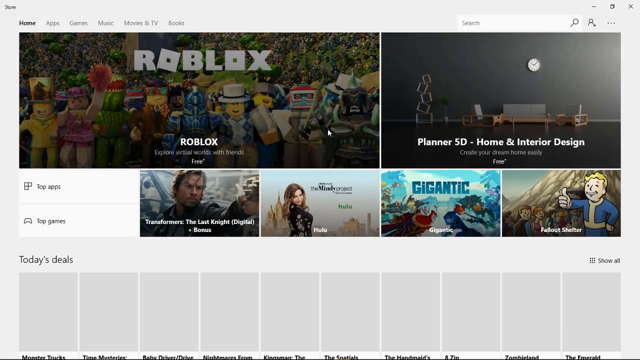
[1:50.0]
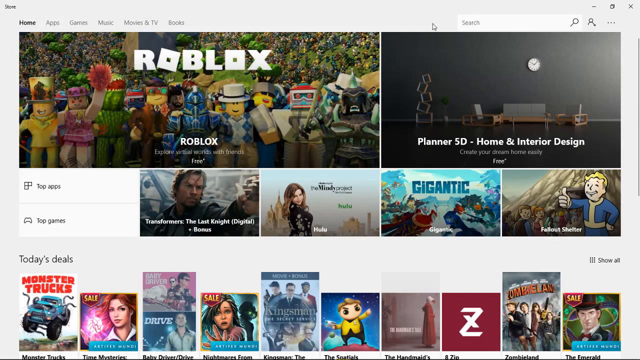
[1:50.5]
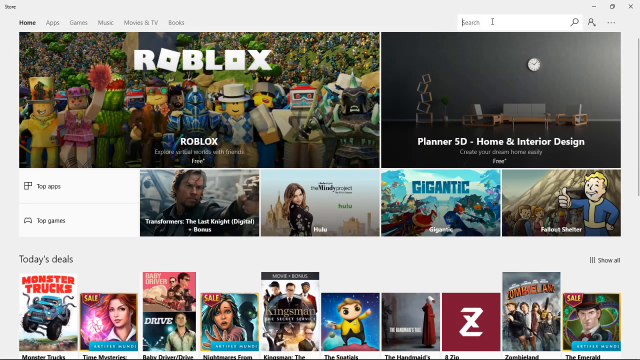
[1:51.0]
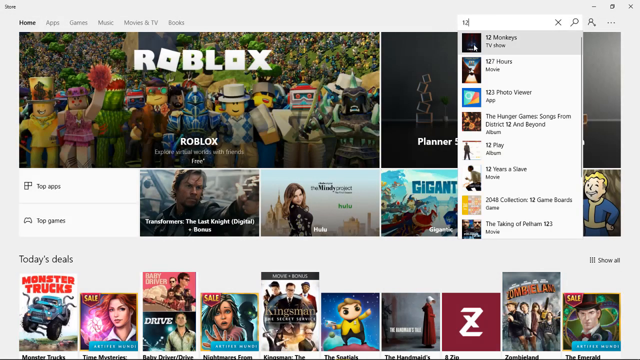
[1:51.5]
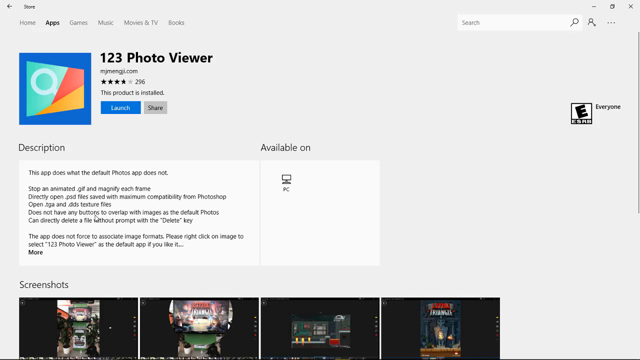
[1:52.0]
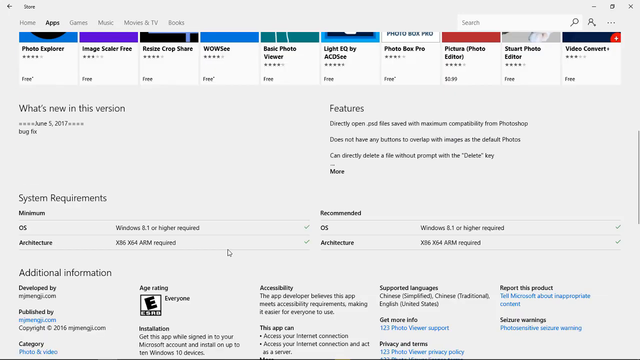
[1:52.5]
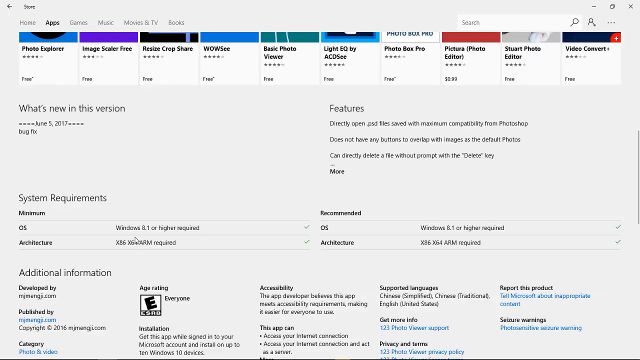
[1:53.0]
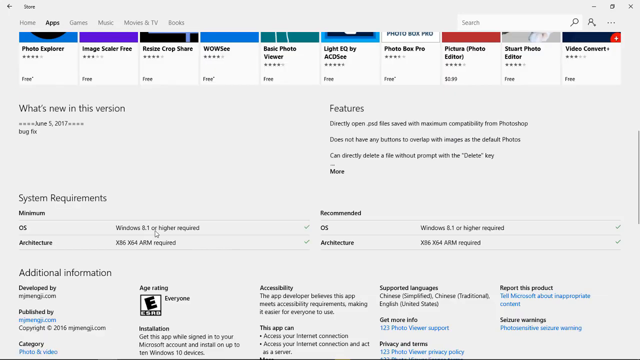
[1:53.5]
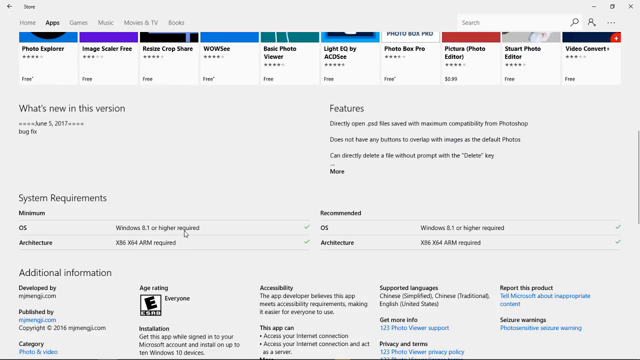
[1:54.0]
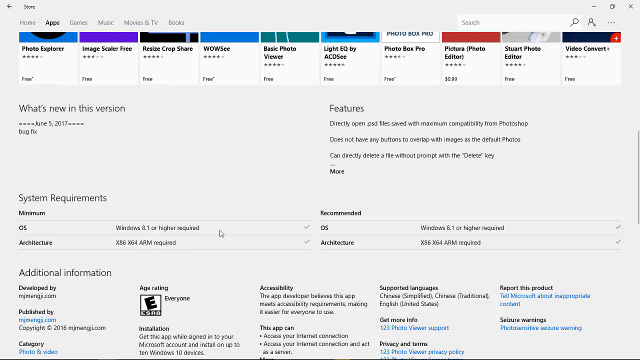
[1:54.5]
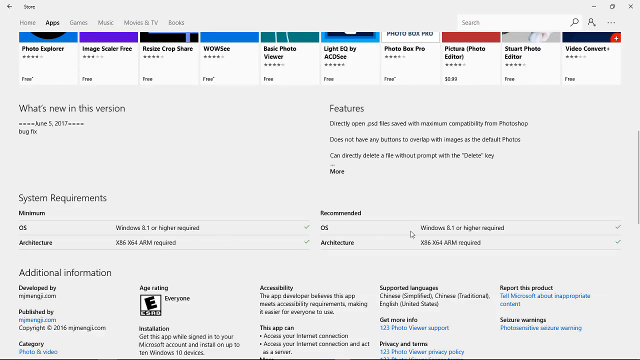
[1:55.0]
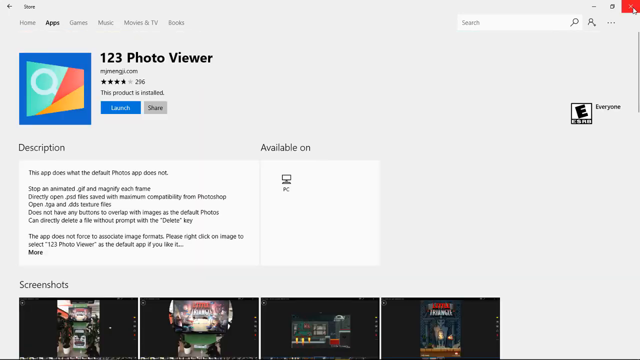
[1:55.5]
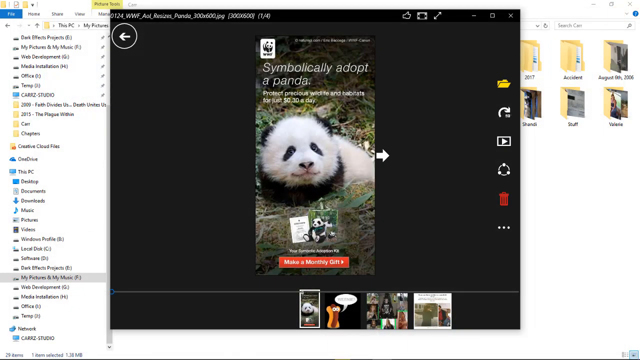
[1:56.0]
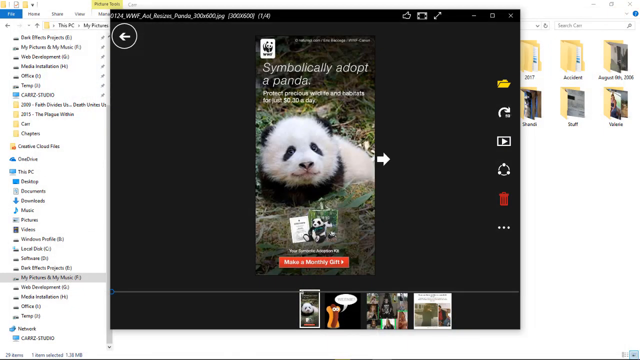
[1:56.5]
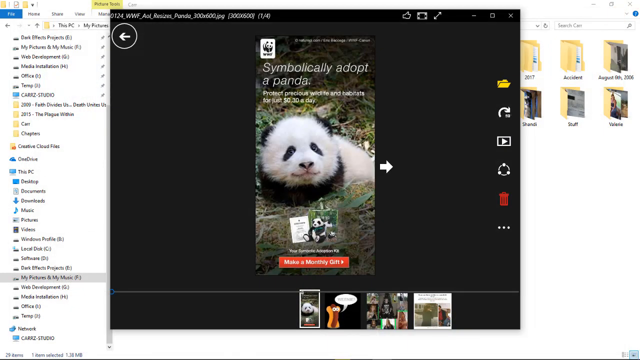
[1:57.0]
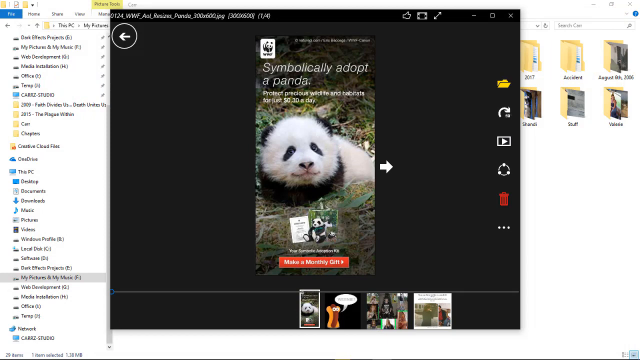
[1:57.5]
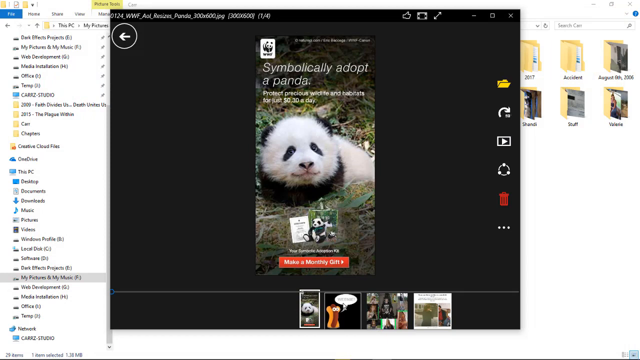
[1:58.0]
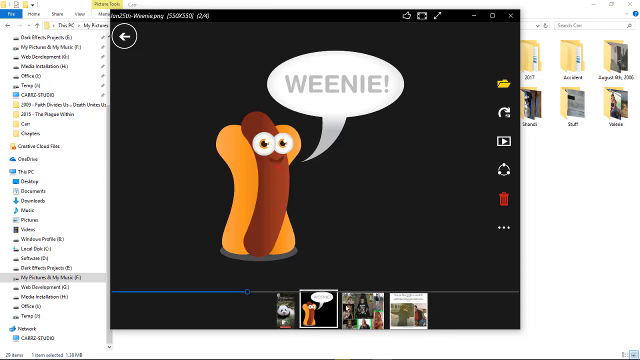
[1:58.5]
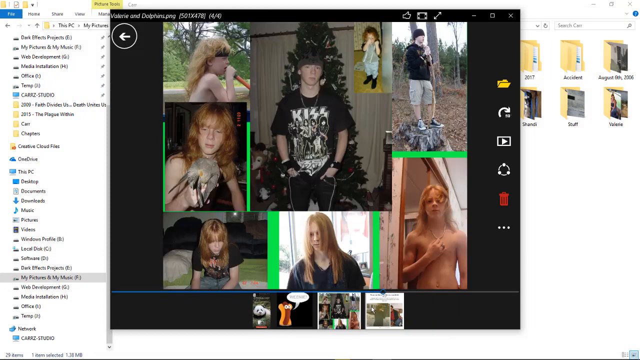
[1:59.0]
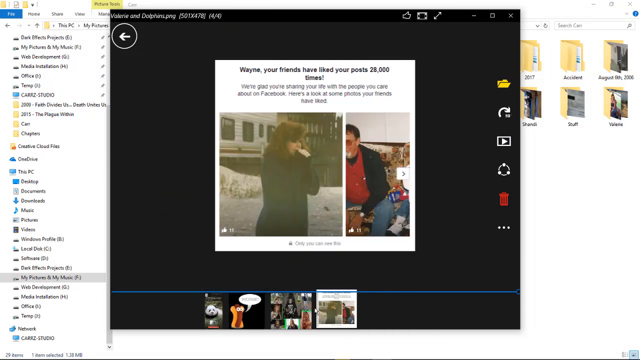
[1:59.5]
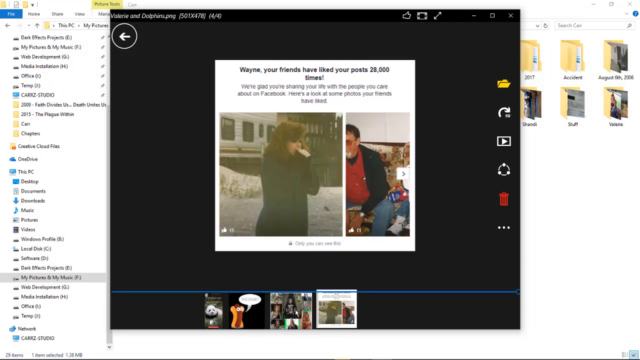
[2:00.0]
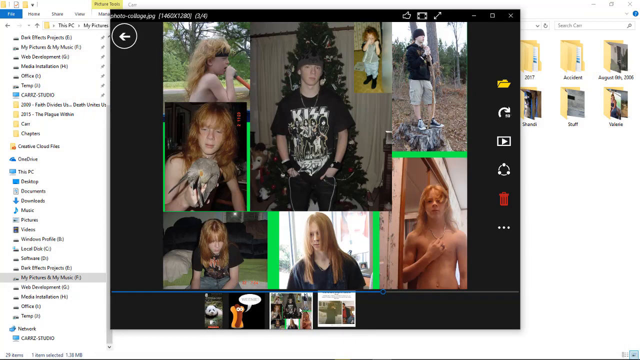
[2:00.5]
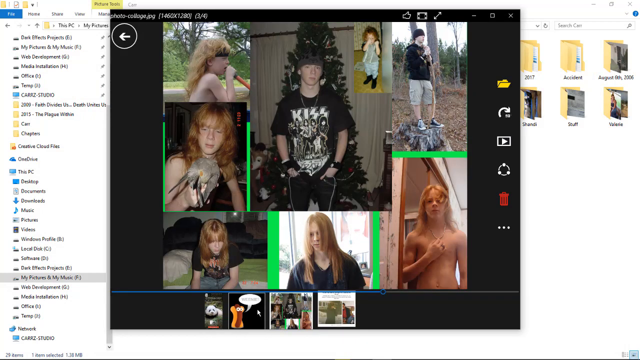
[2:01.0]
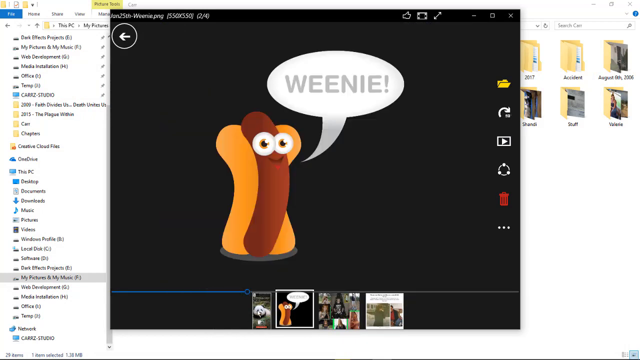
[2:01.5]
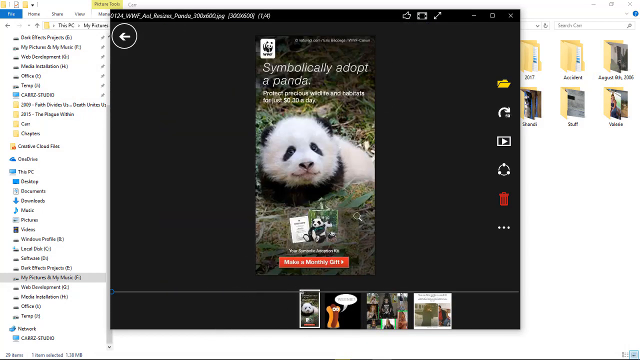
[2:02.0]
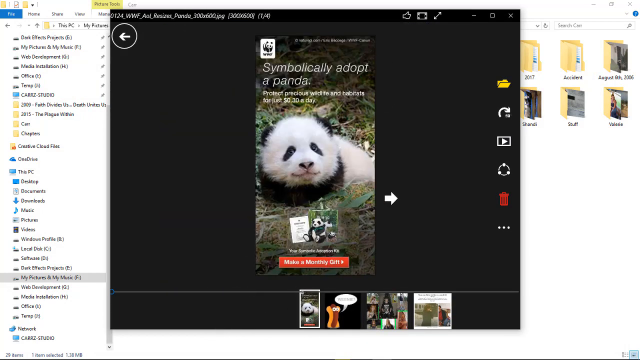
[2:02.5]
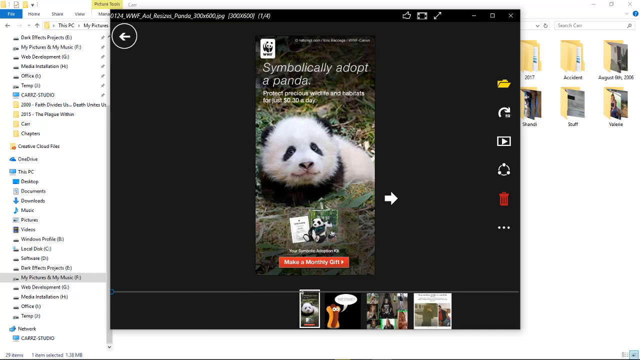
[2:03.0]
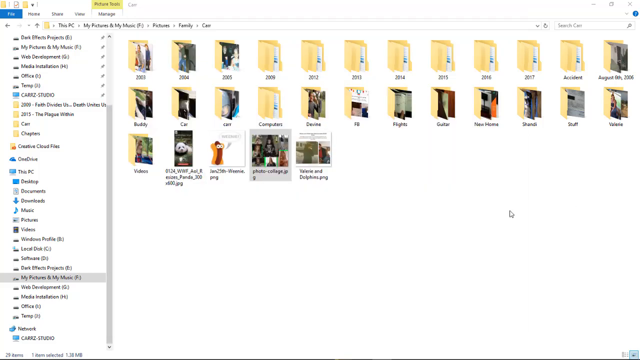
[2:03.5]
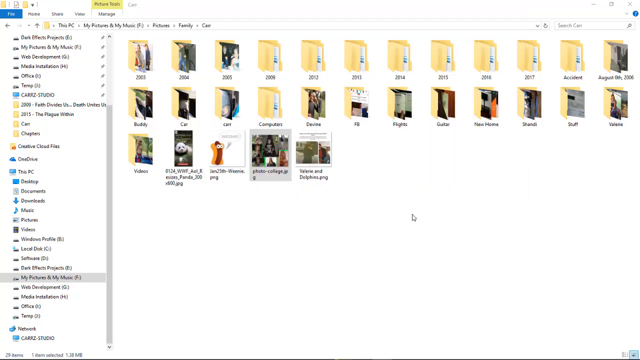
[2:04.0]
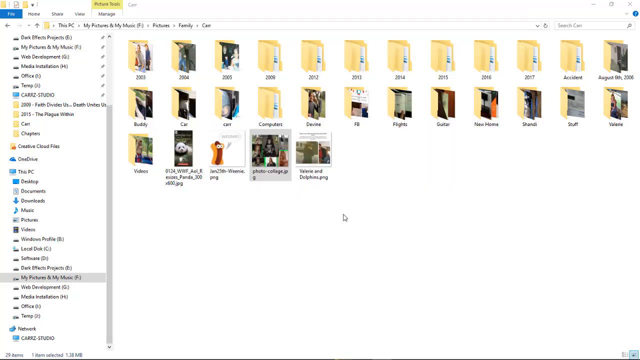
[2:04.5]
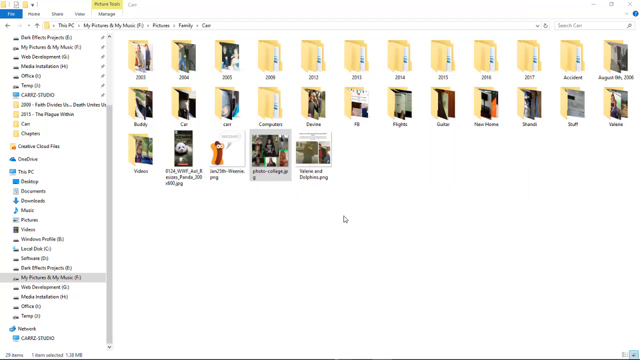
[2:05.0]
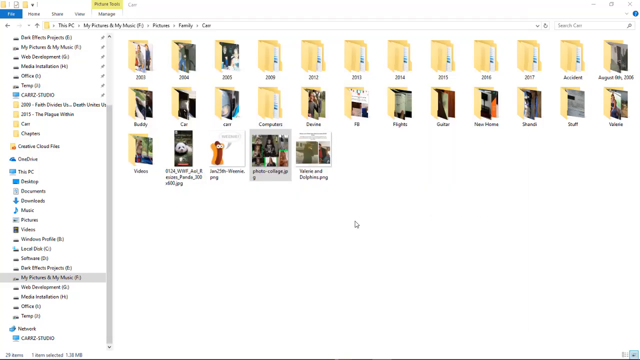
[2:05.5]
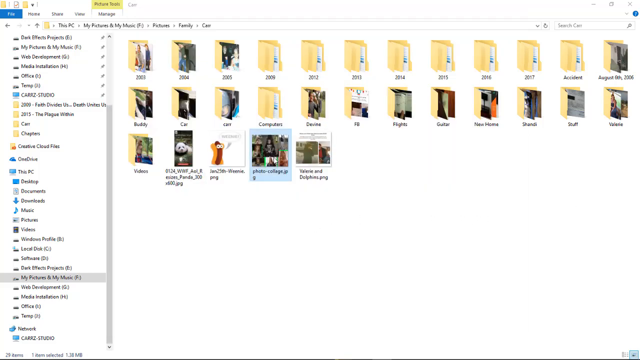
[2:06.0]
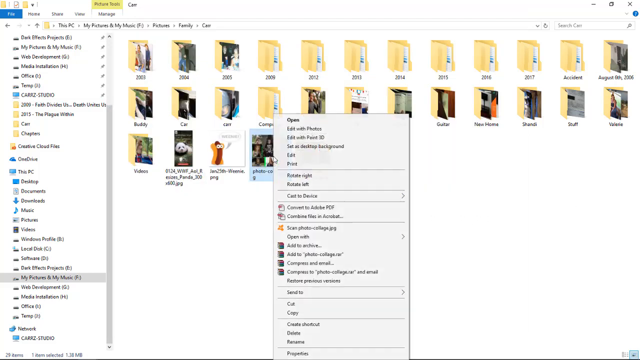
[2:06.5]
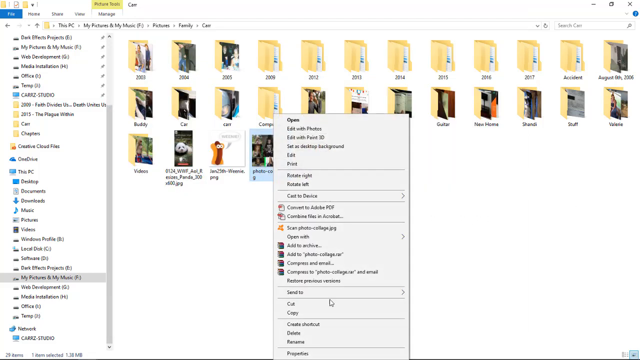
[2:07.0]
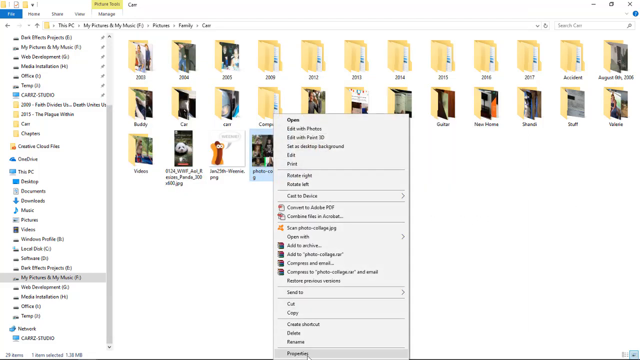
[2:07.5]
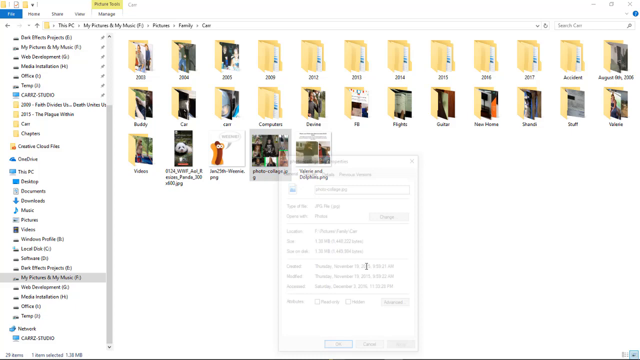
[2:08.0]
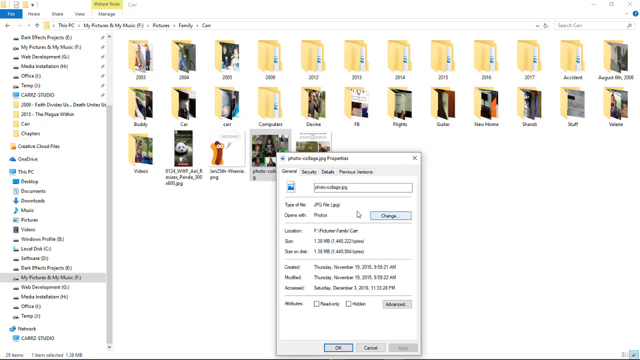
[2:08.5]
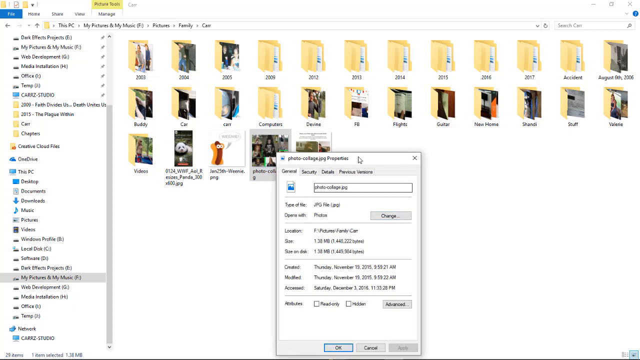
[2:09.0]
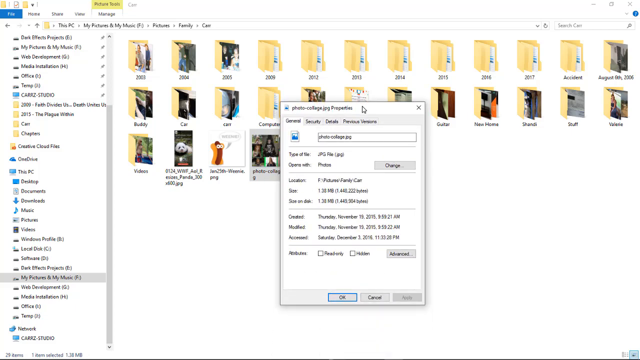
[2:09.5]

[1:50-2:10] What appears to be a website for Roblox has a whole bunch of images on its front page. The person navigates to a different page that seems to be for an app, with the app's logo on the left side in multiple colors, including blue, light blue, red and an orange-yellow. On the right side, black text says "1, 2, 3 Photo Viewer". They scroll all the way to the bottom of the page, apparently reading some black text. They click off of it, and a window opens with a picture of a panda and thumbnails underneath it. The person seems to scroll through his pictures, eventually reaching one showing a collage of a person, and then goes back to the panda. He exits that and is on a page with a bunch of manila folder icons. He right-clicks, a menu pops up, he selects an option, and then he goes back to the Roblox website.